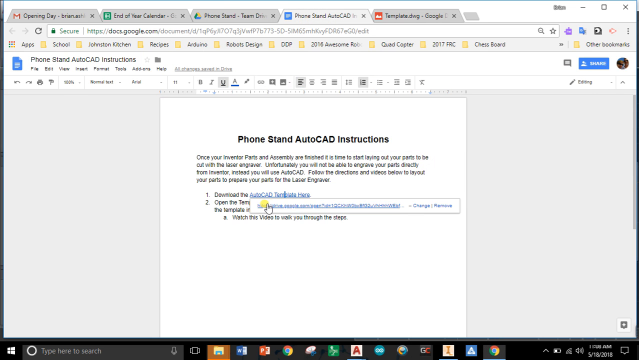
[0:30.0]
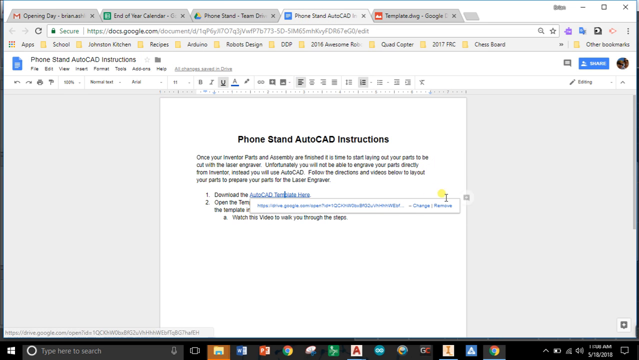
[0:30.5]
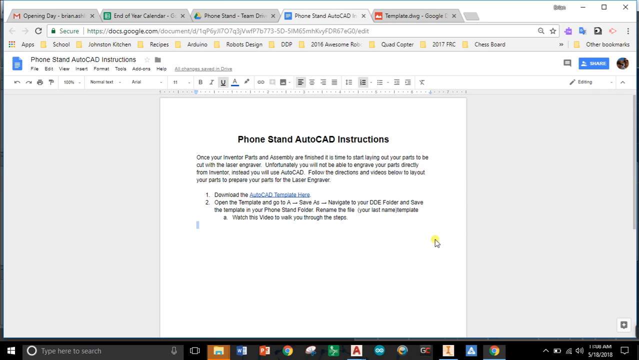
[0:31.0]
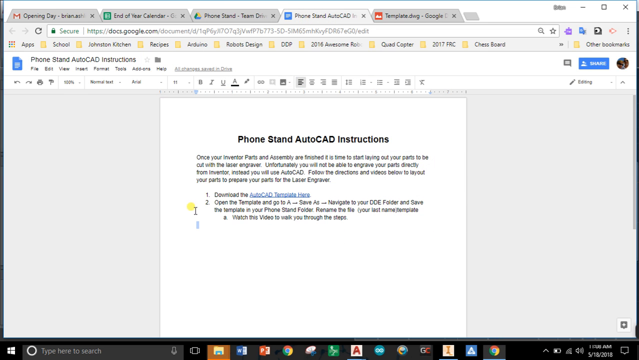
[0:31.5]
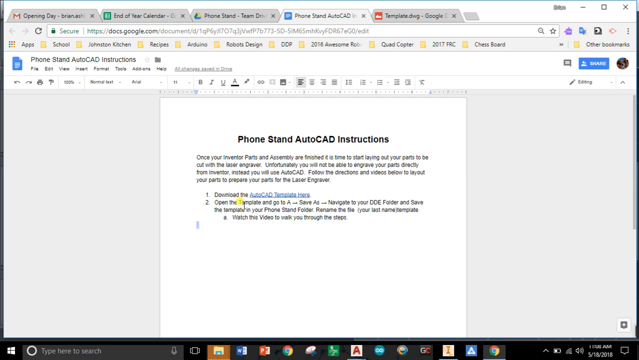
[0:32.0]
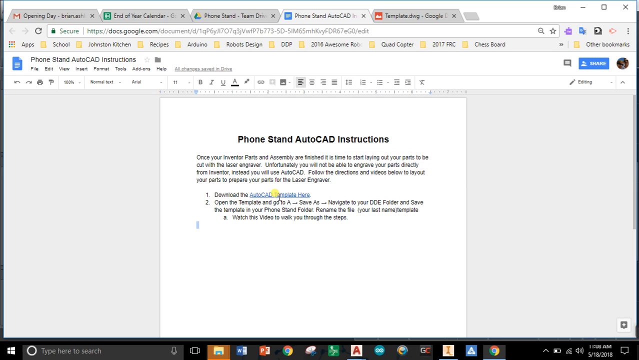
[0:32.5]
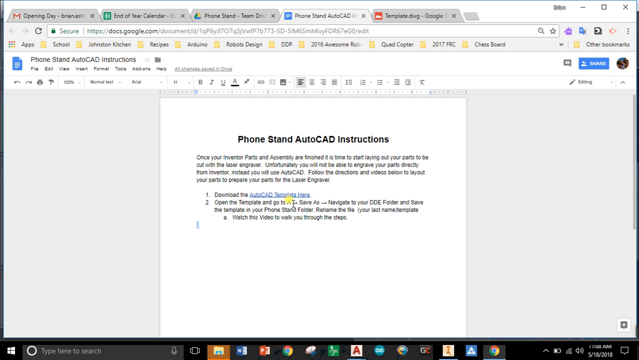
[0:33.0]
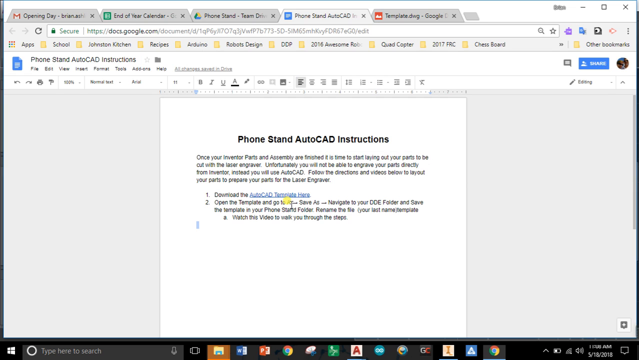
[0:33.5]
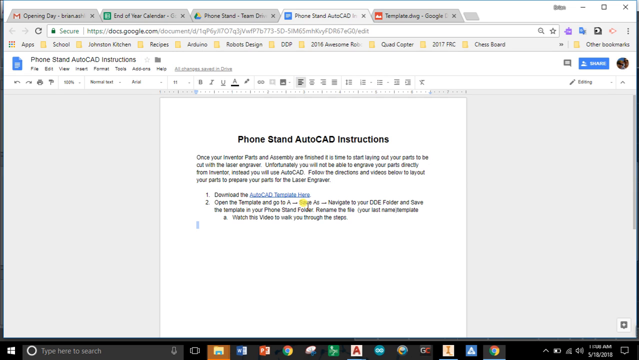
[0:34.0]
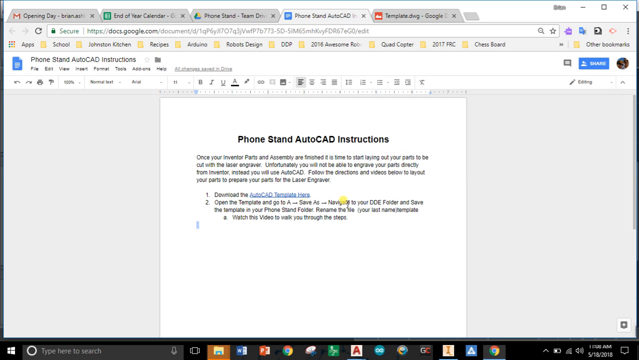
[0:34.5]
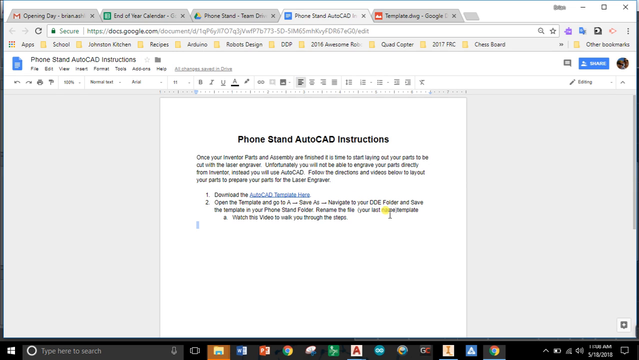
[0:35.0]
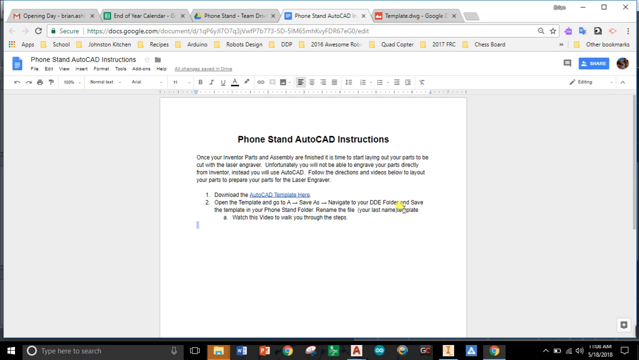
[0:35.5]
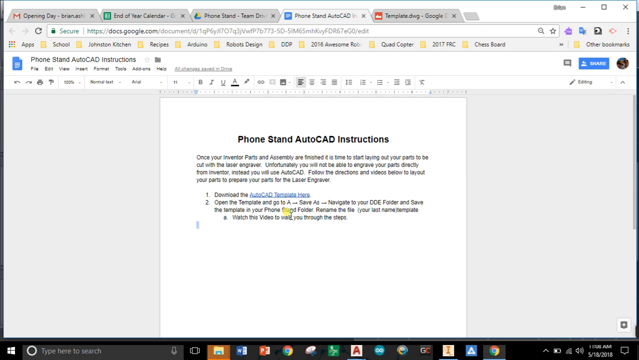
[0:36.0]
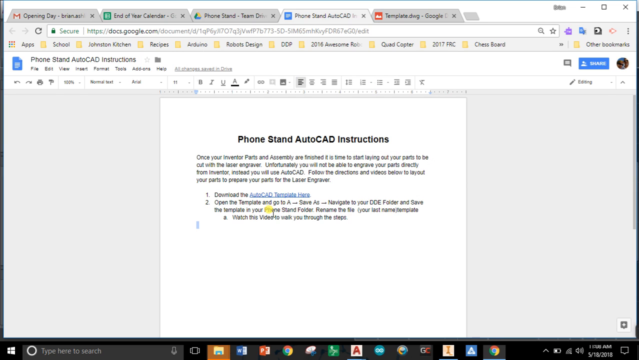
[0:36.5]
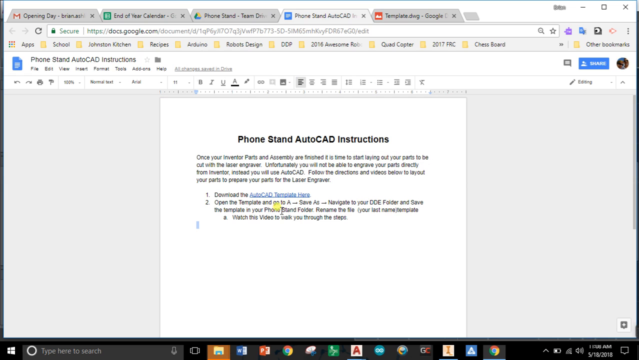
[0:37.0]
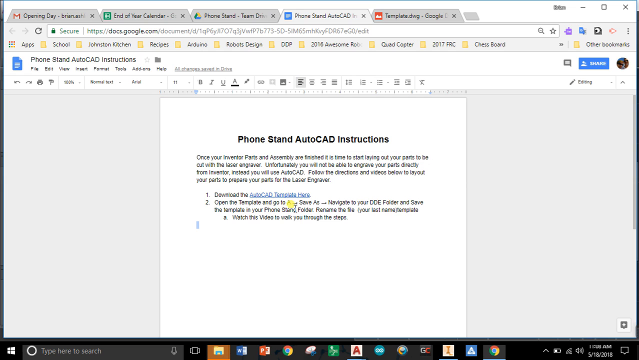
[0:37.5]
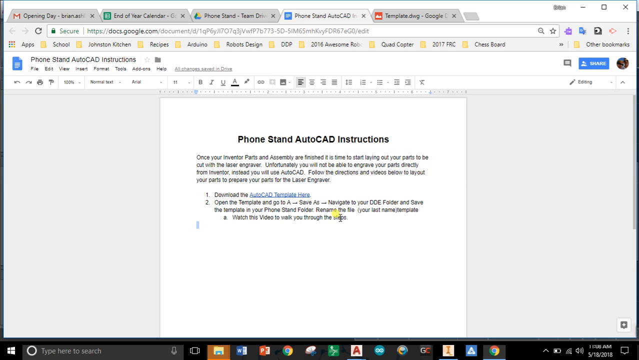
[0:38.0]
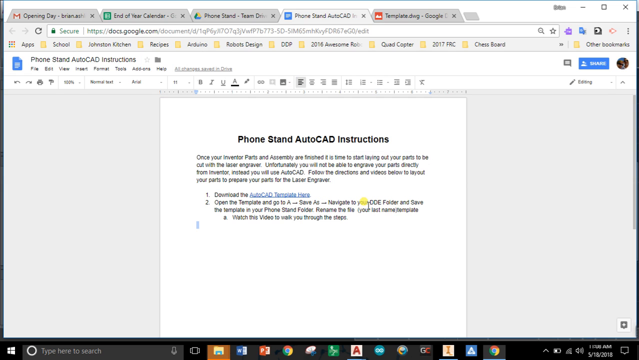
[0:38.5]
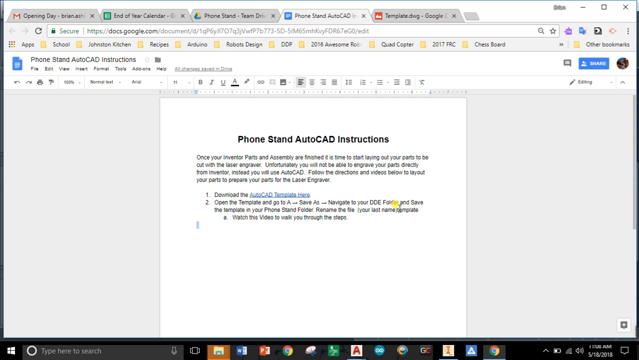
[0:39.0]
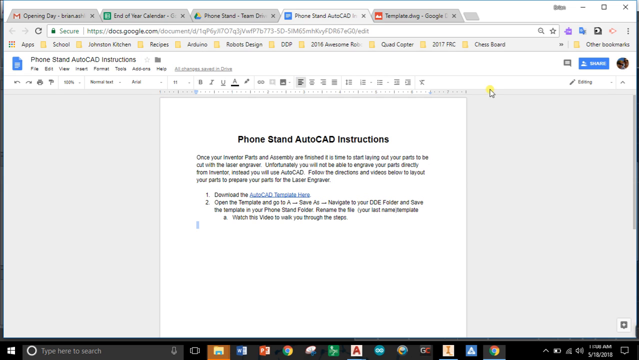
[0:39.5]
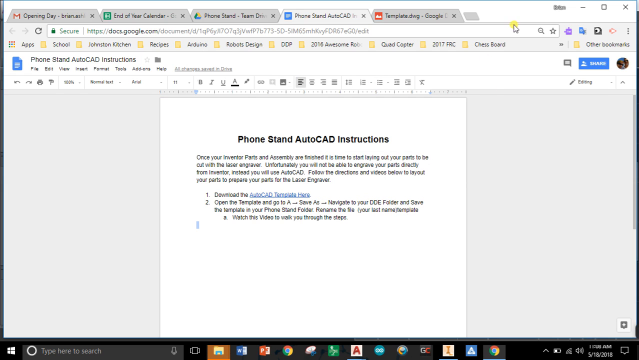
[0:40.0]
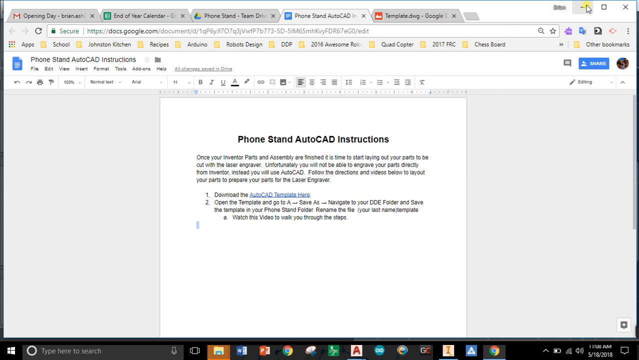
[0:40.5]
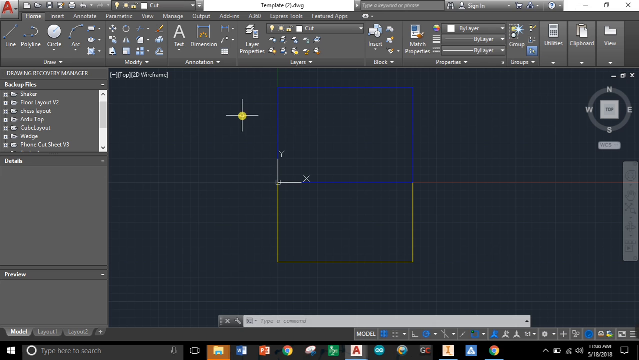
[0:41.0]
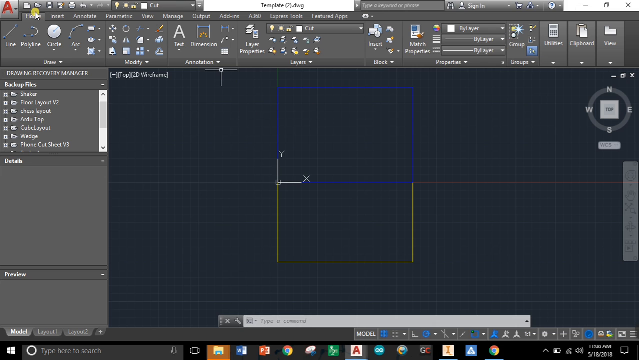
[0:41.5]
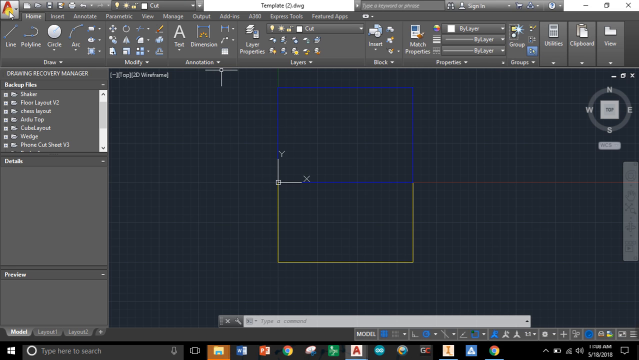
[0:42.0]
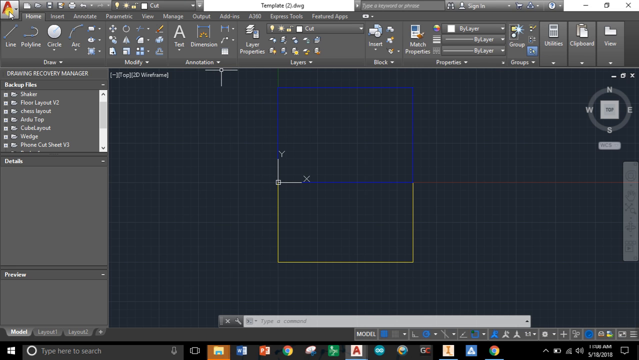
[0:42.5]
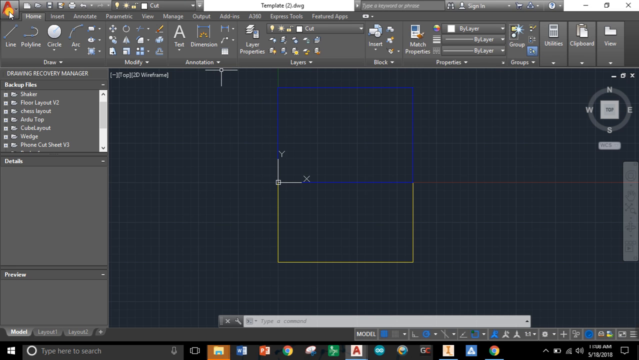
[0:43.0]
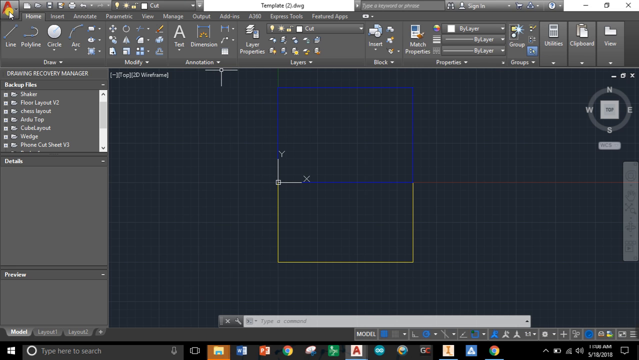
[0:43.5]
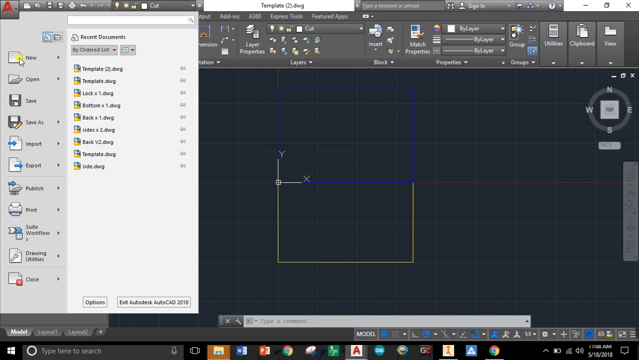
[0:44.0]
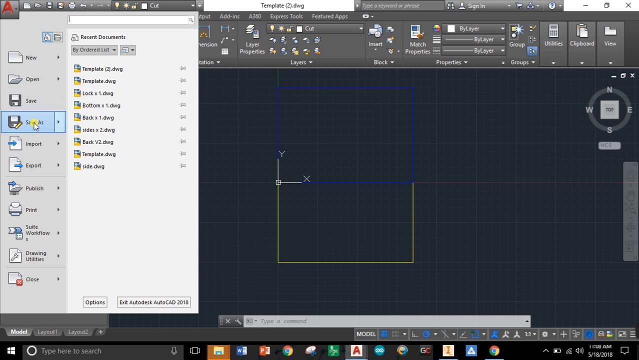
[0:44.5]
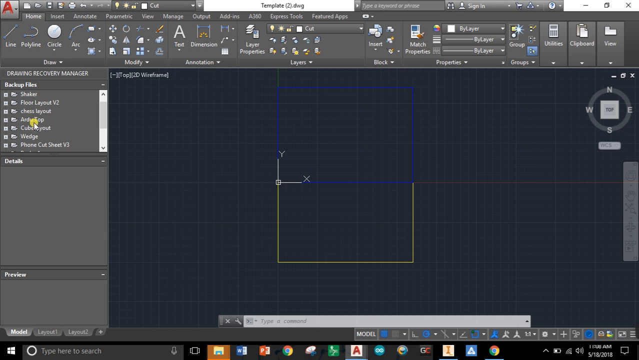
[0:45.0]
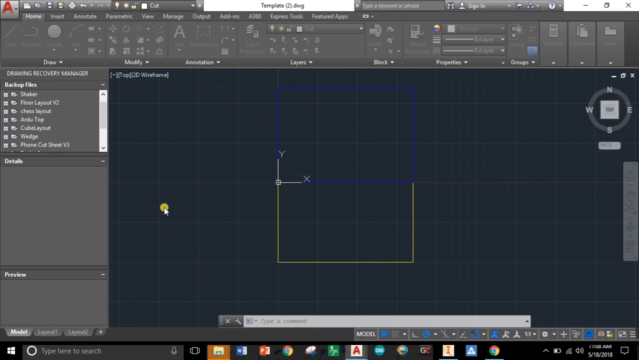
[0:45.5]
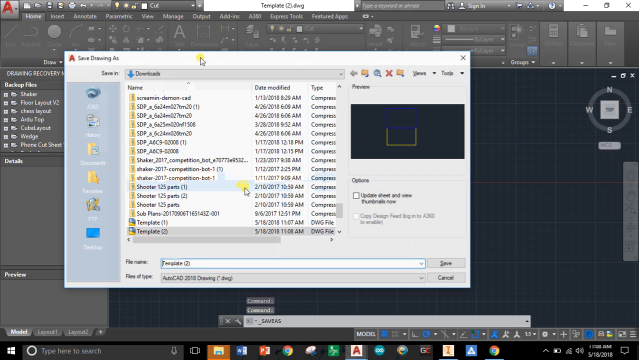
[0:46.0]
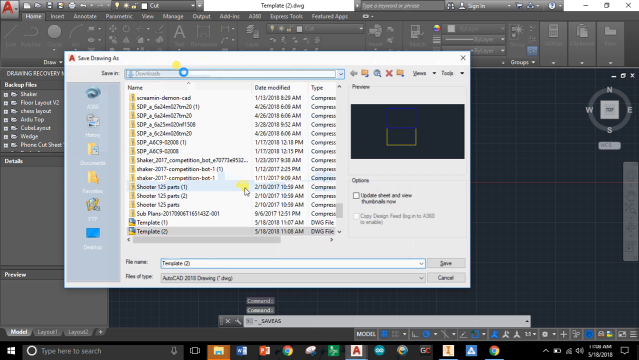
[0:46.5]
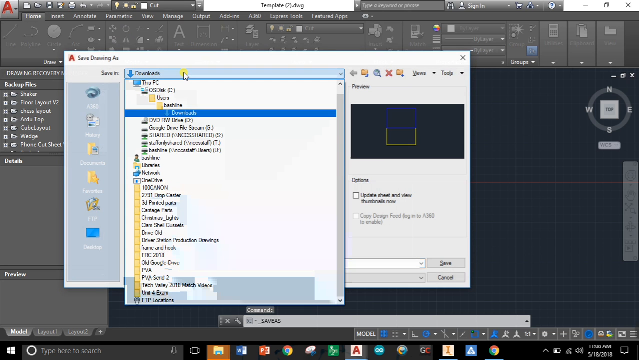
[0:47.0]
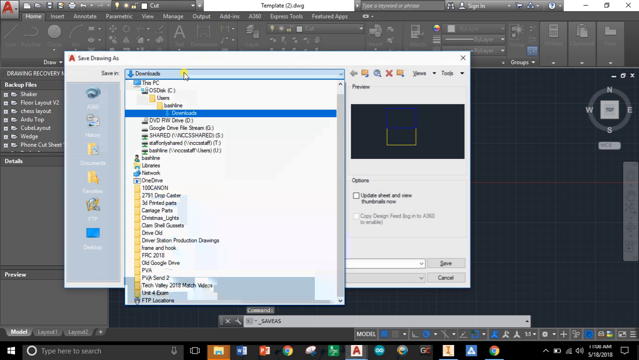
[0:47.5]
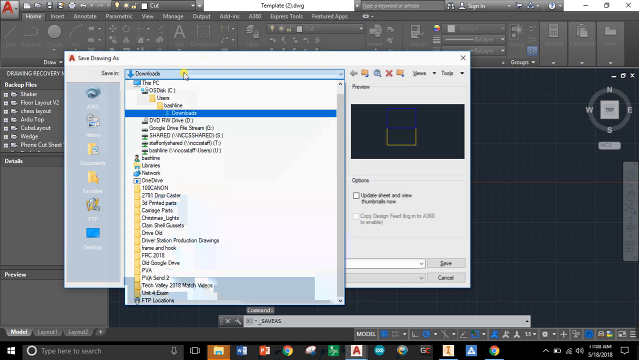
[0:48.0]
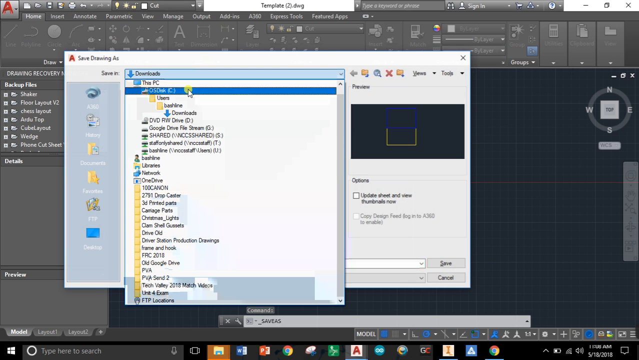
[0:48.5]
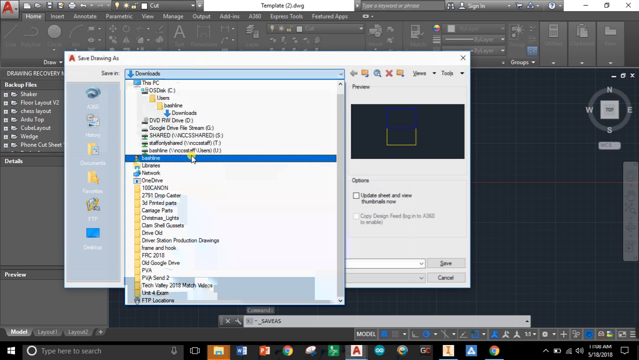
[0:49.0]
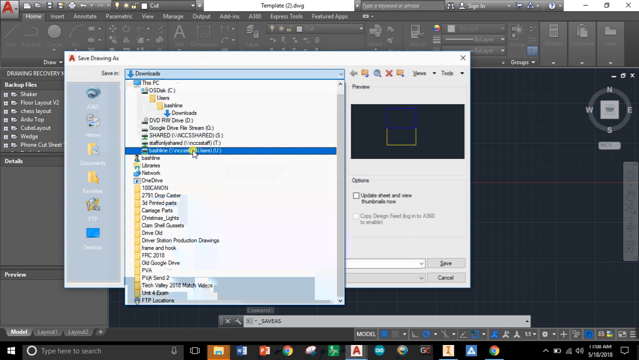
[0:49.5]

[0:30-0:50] The cursor stays on the link for a little while, then moves down through the text, which apparently has two parts: step one with the download link, and step two with information on opening the file in the templates and how to save and store the template. After highlighting this with the mouse, they open the AutoCAD software, go to the top right side of it, choose the save as option, and open their computer's folders to search through their drive. They seem to go into the downloads folder first, then scroll to what appears to be an external drive. The shot ends just as they select that external drive.